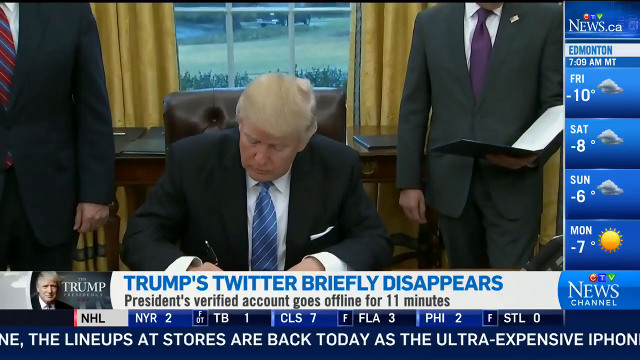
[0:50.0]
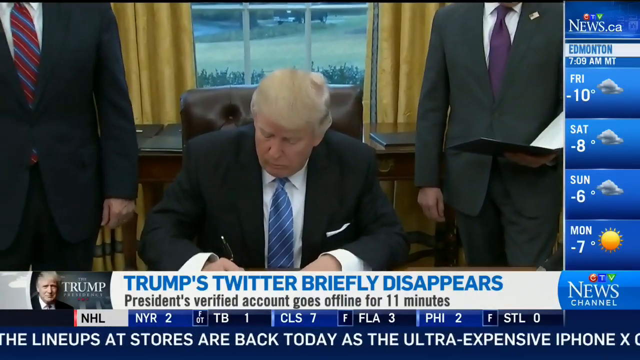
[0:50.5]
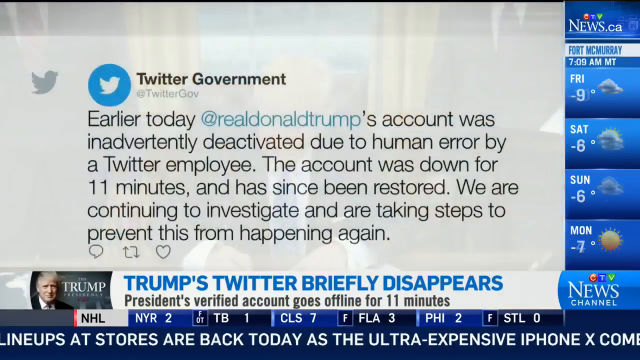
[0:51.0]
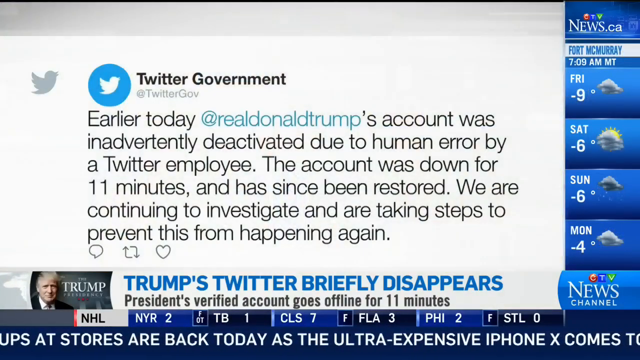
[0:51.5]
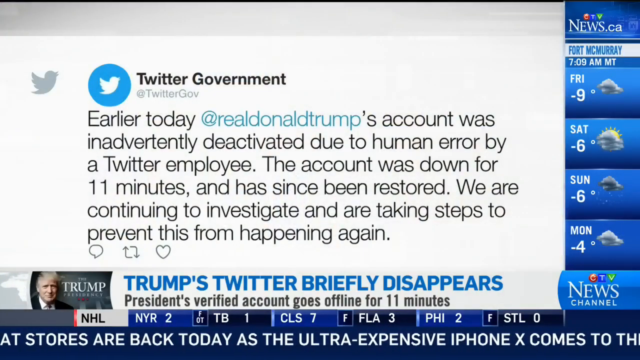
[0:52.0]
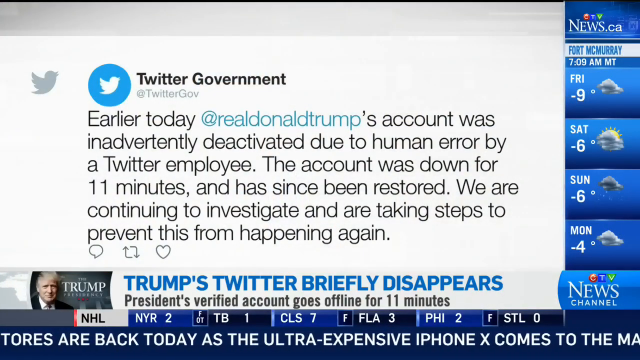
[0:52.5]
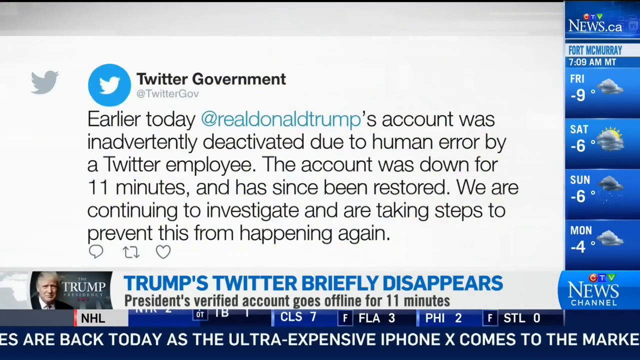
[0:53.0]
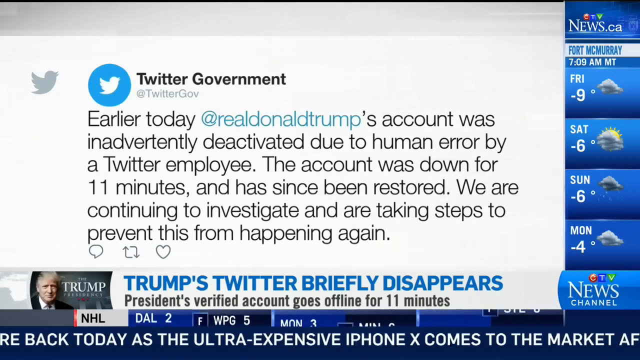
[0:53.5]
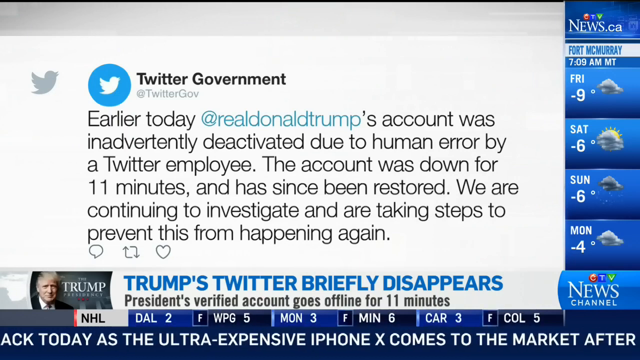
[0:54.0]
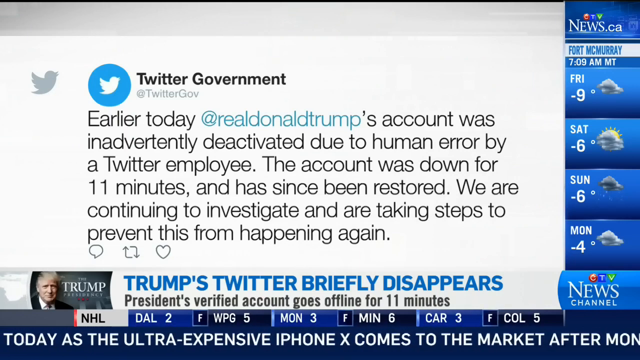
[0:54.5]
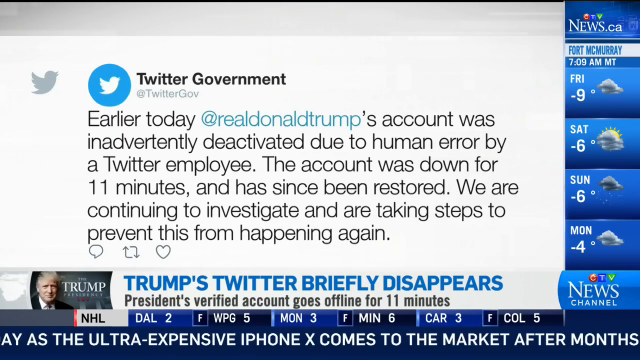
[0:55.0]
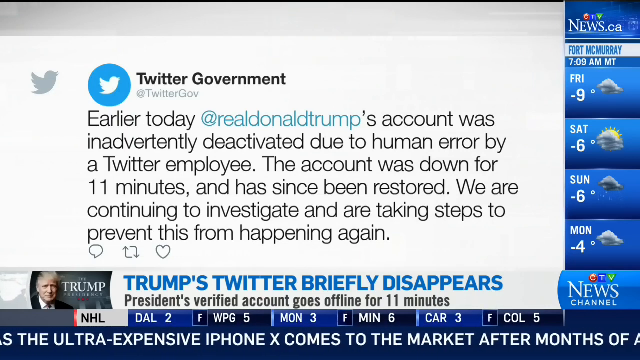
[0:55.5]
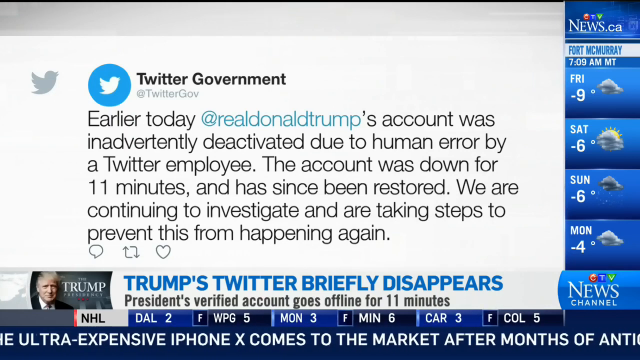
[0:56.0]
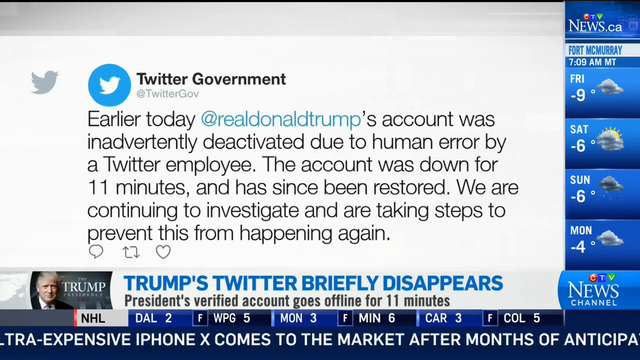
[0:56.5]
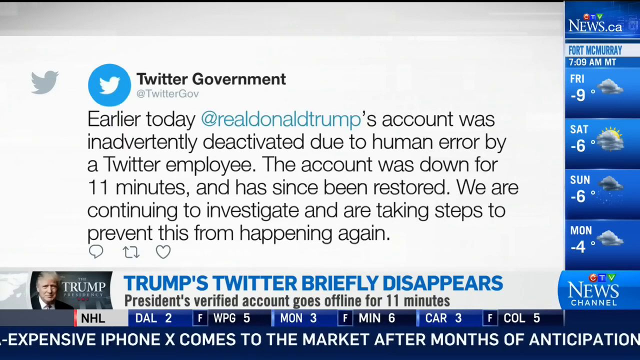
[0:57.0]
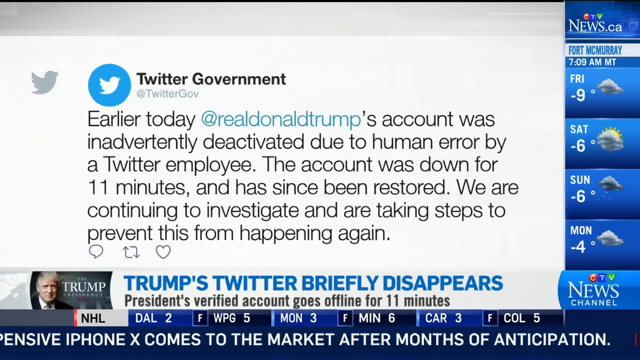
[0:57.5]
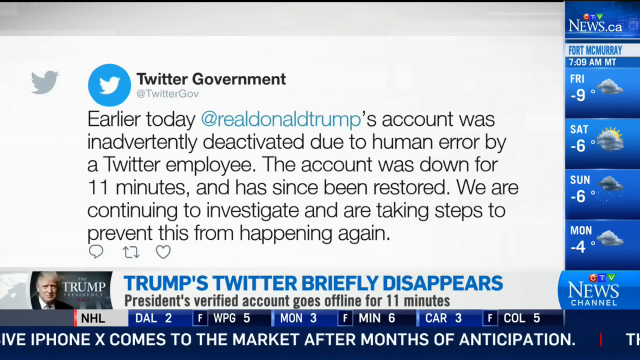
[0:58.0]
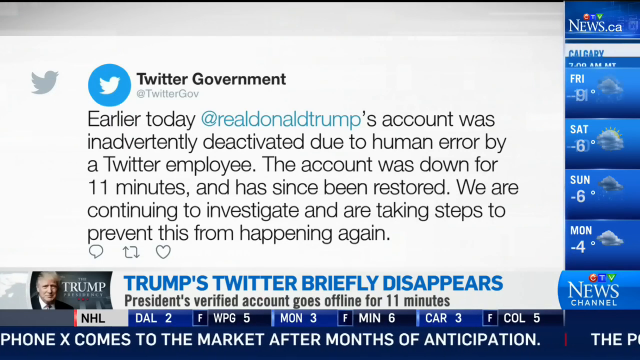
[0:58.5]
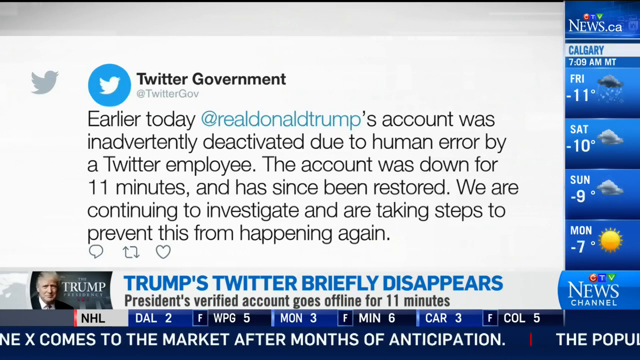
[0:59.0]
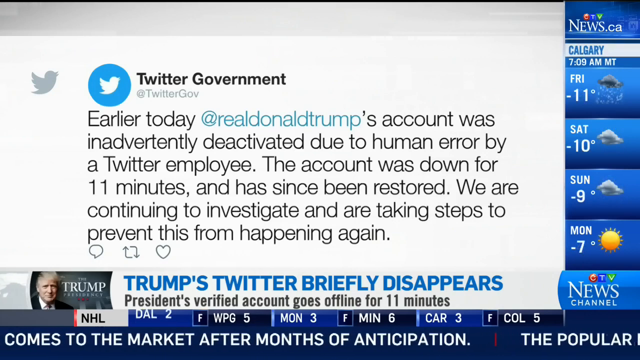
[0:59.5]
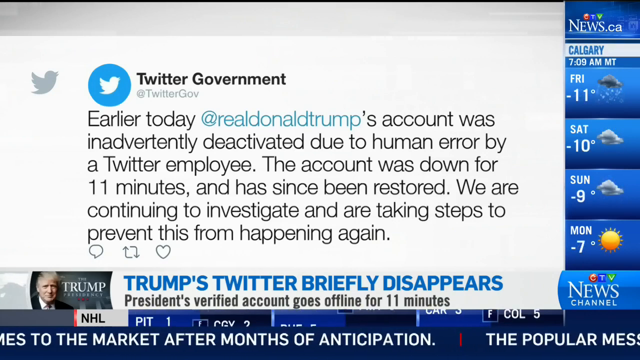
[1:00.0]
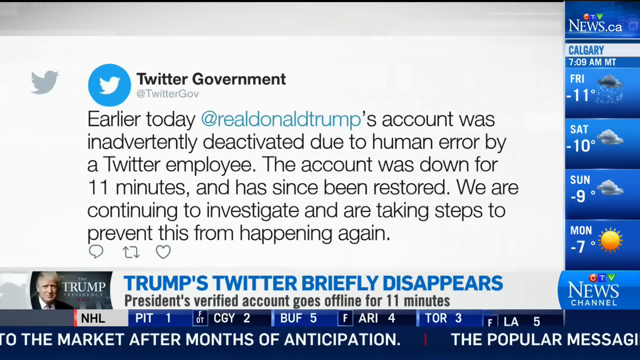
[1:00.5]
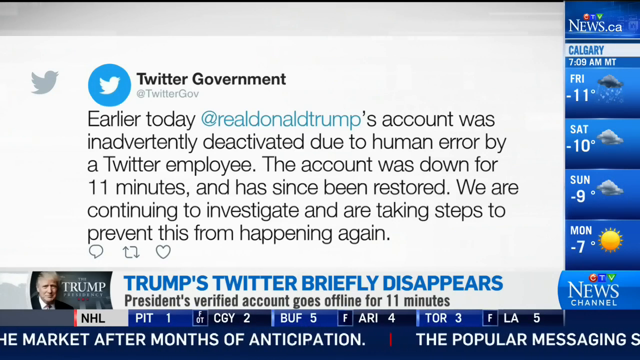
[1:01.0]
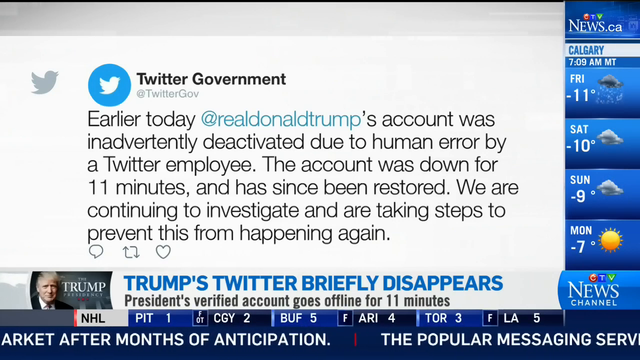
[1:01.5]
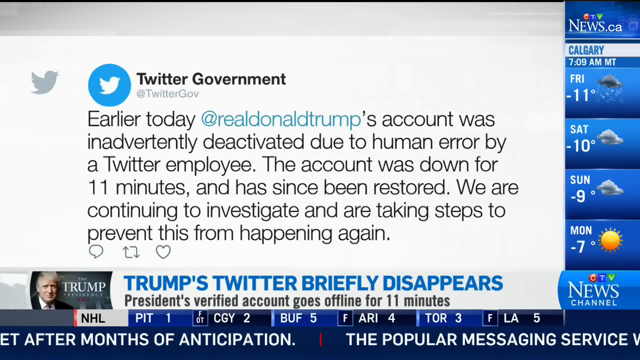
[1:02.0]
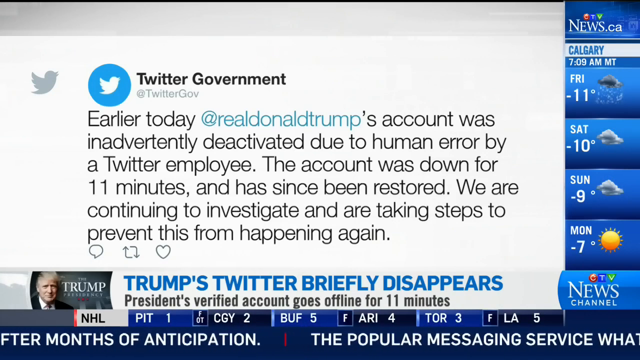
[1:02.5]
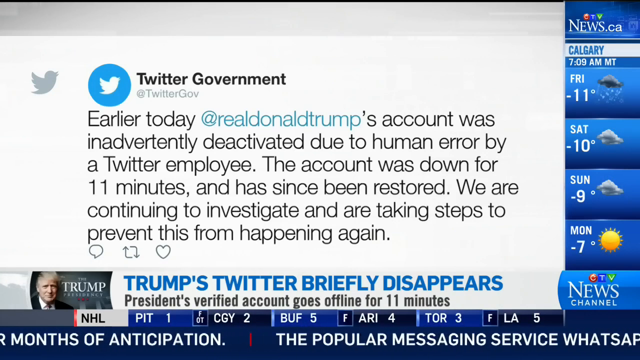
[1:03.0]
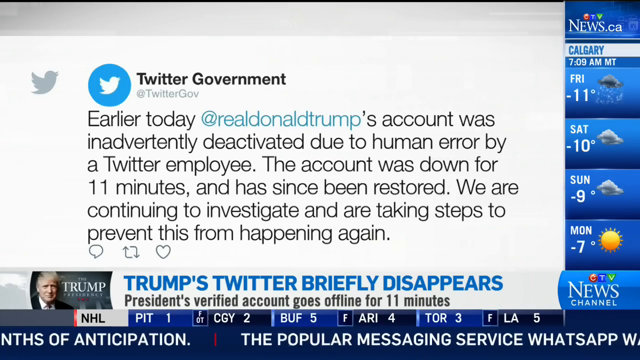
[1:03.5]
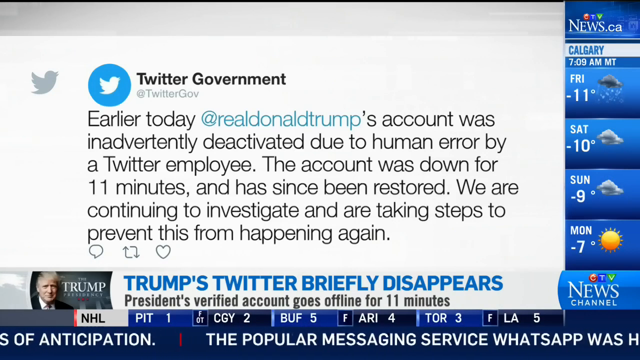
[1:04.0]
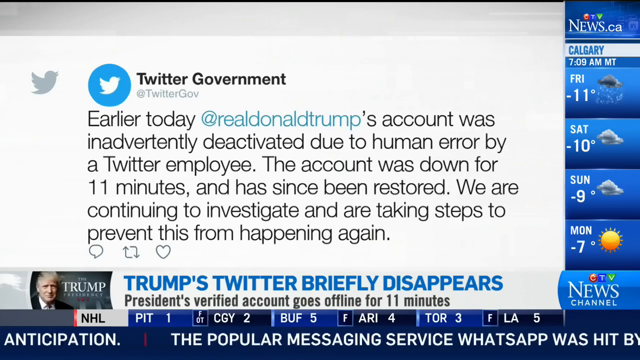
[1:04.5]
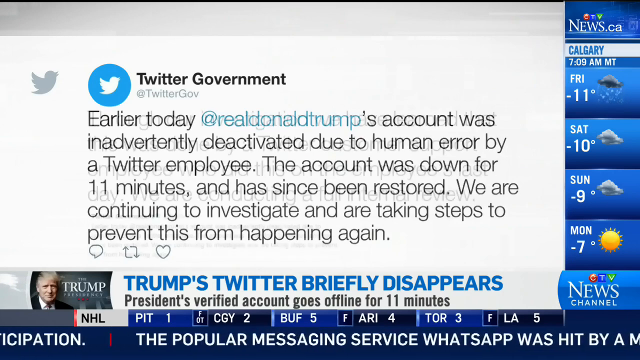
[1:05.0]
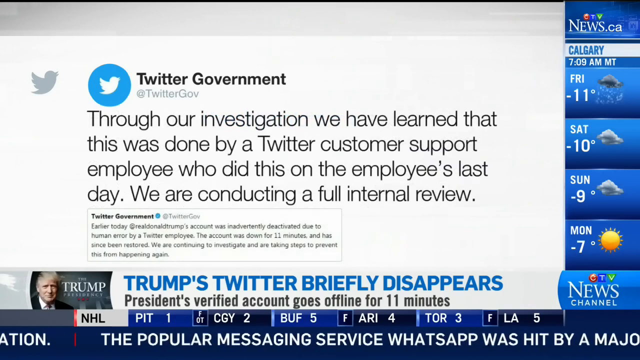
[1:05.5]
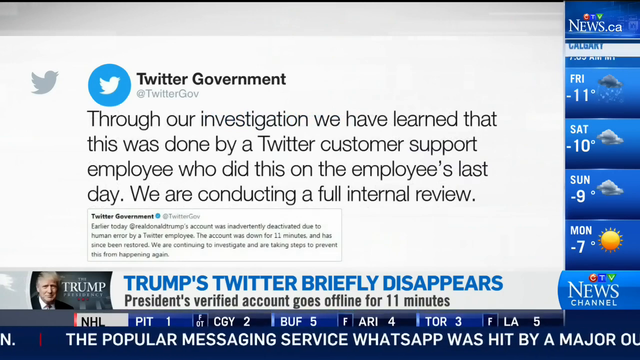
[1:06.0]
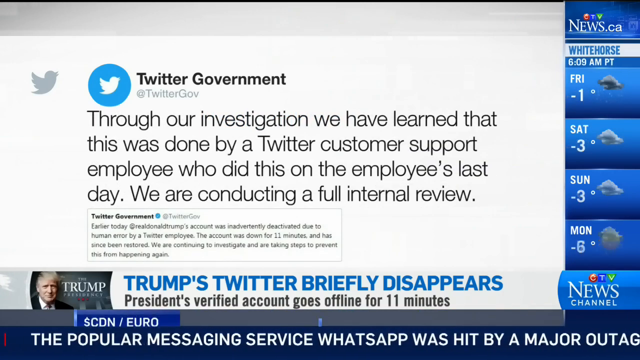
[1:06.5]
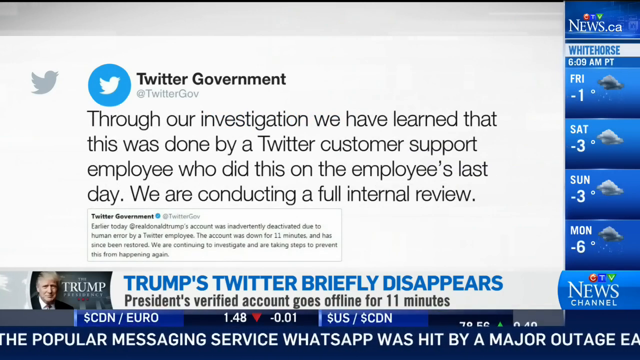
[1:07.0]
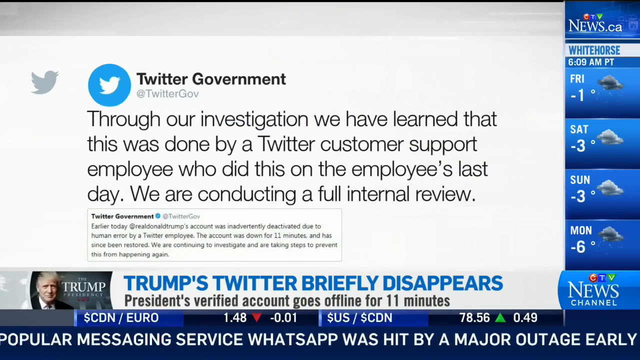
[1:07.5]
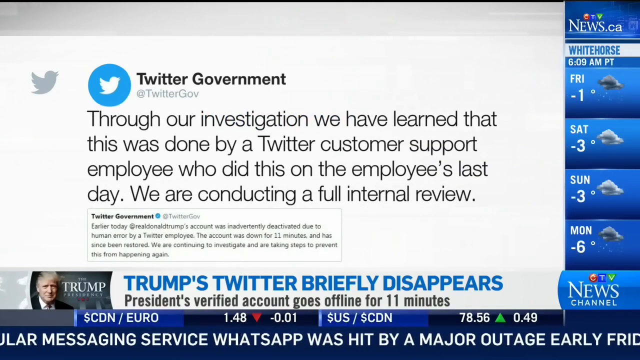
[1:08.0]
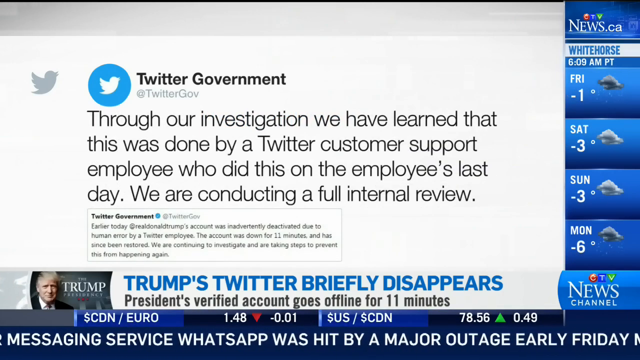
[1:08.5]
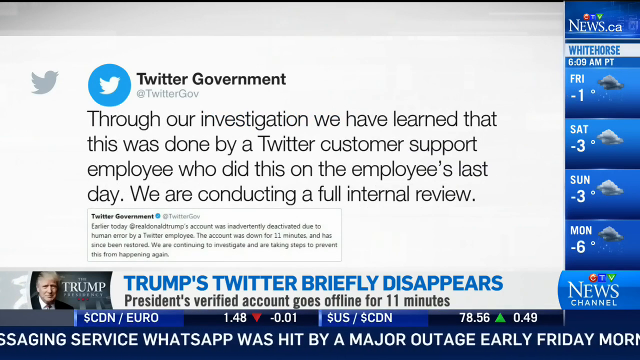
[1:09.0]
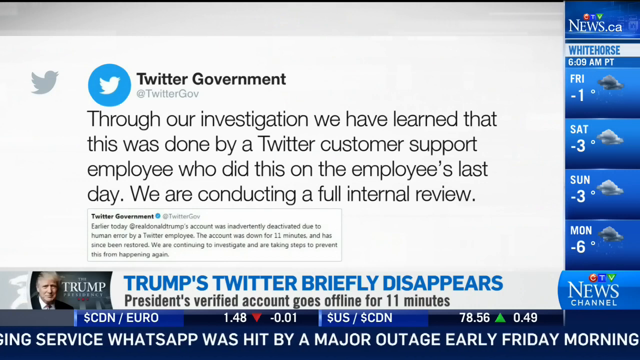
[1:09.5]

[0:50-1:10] A statement from Twitter government appears, with the old Twitter logo visible twice. It reads: "earlier today, a real Donald Trump's account was inadvertently deactivated due to human error by a Twitter employee. The account was down for 11 minutes and has since been restored. We'll continue to investigate and are taking steps to prevent this from happening again." Beneath the statement are the reply, share and heart icons. The headline about Twitter briefly disappearing is still on screen. A second statement from Twitter follows: "through our investigation, we have learned that this was done by a Twitter customer support employee," and it also mentions conducting a full internal review. Both statements are on a white background. The weather report remains on the side and the sports scores at the bottom.